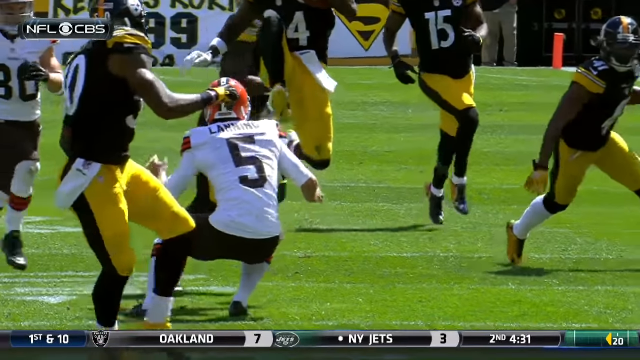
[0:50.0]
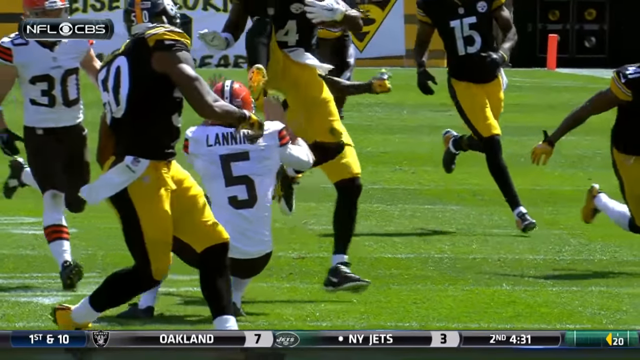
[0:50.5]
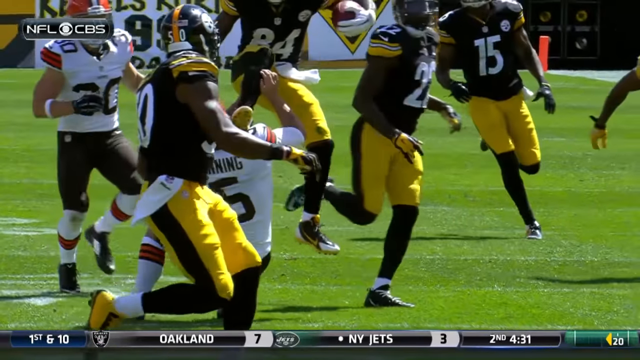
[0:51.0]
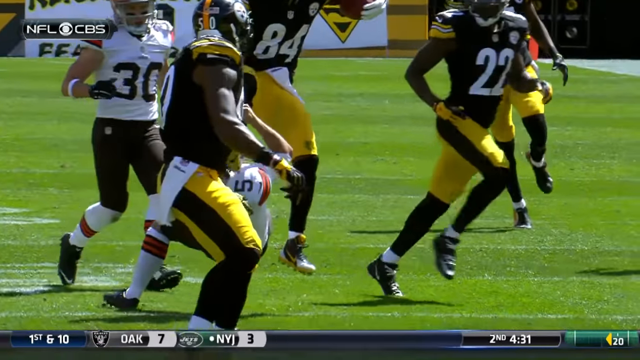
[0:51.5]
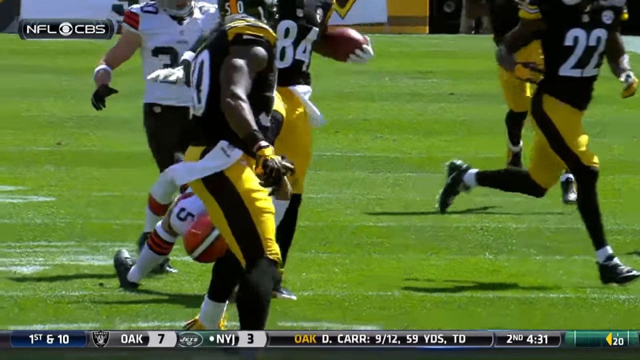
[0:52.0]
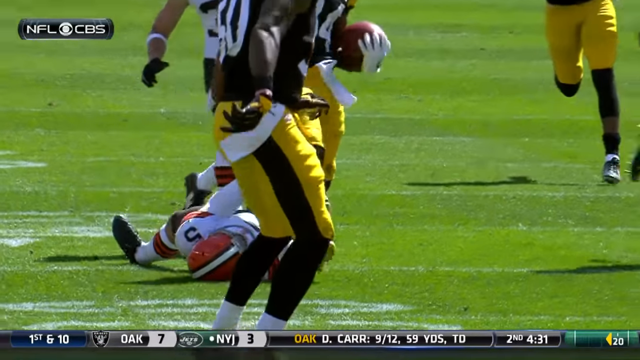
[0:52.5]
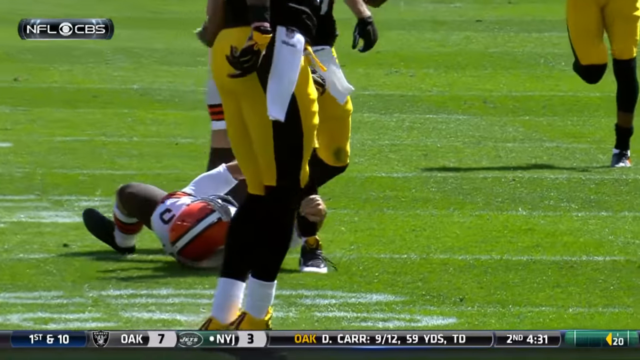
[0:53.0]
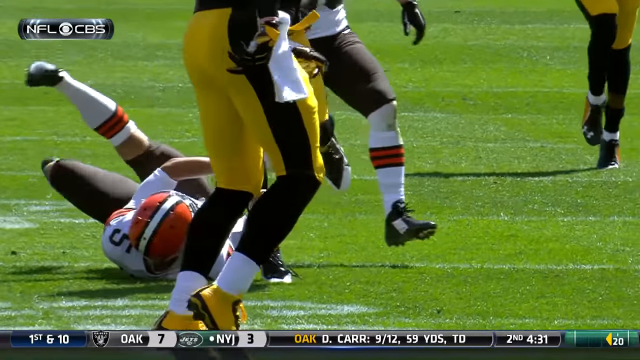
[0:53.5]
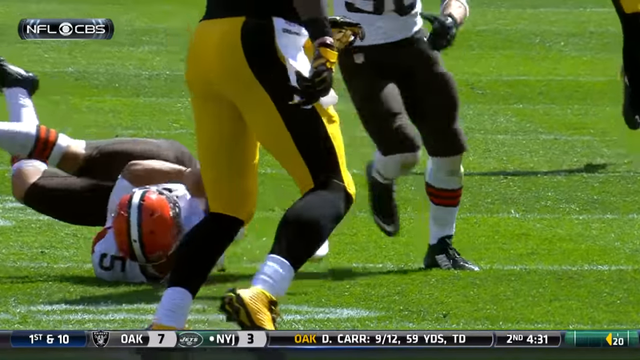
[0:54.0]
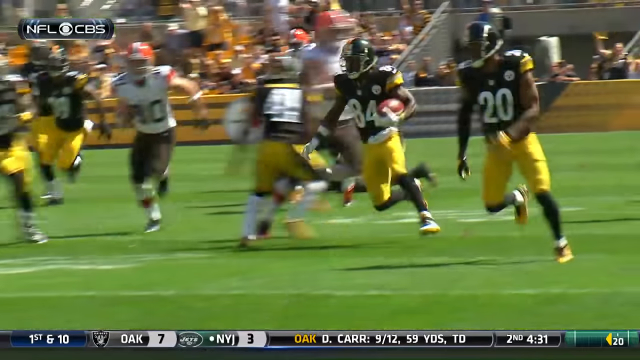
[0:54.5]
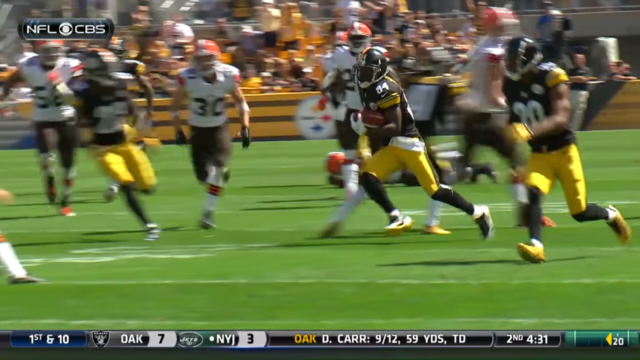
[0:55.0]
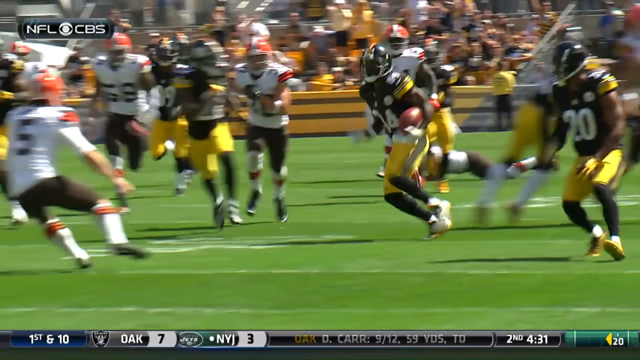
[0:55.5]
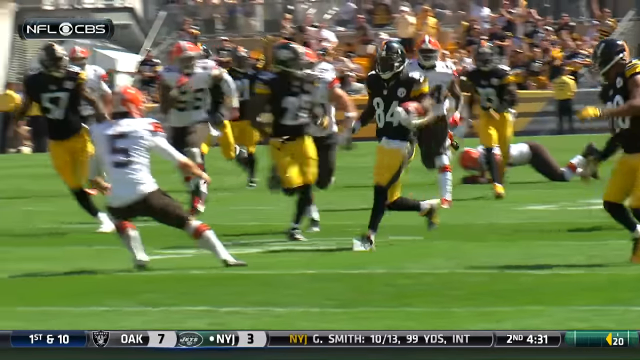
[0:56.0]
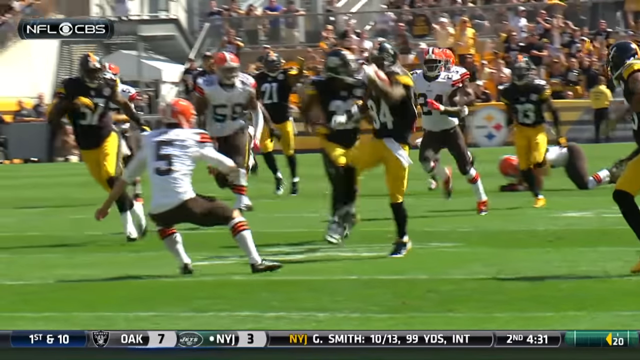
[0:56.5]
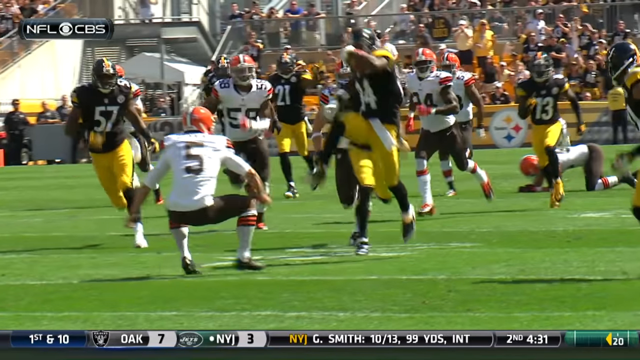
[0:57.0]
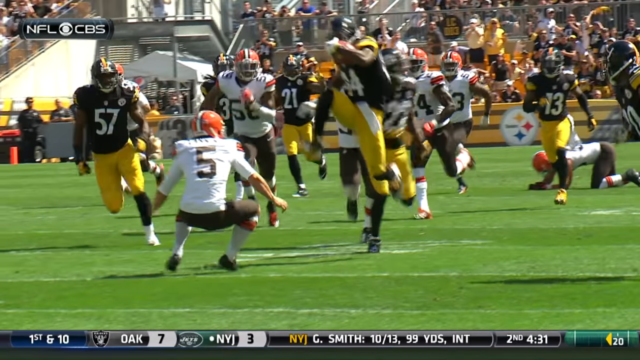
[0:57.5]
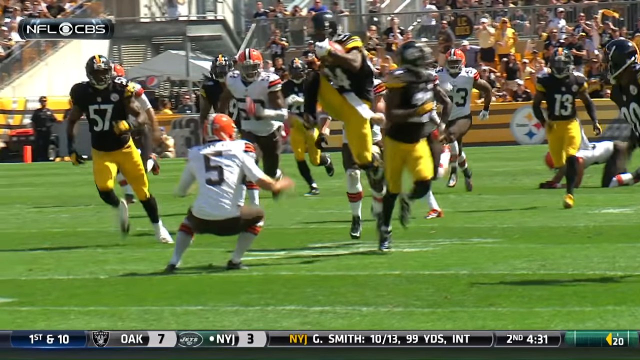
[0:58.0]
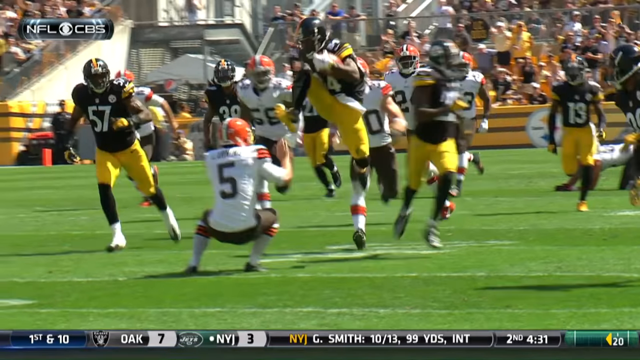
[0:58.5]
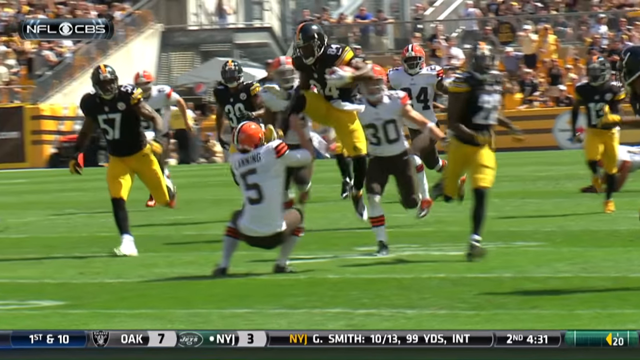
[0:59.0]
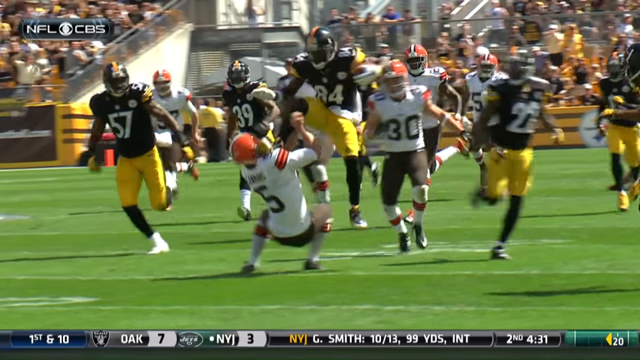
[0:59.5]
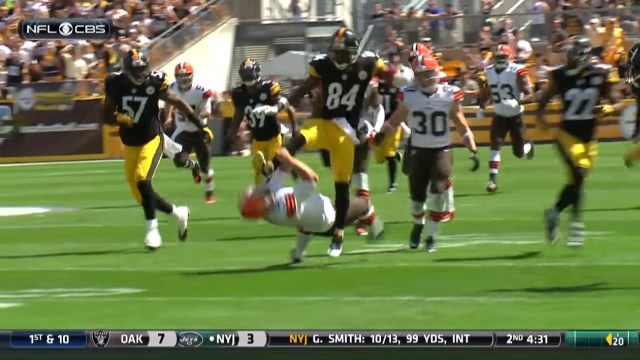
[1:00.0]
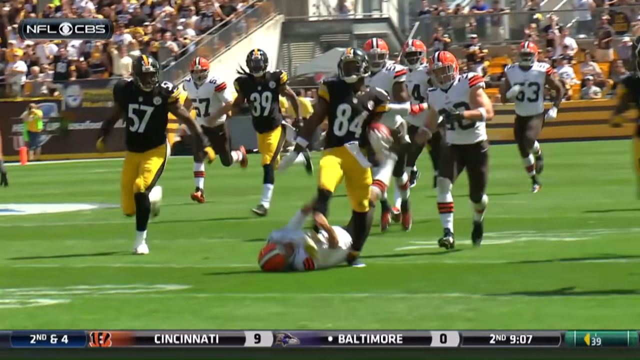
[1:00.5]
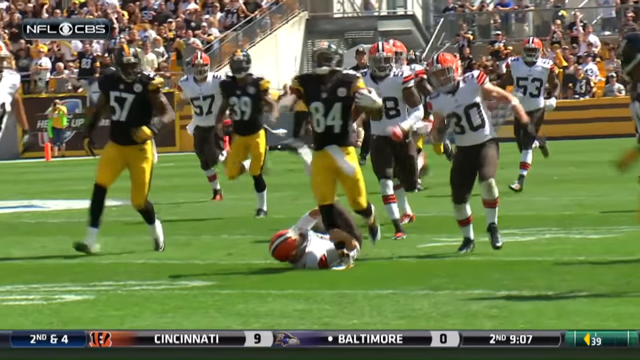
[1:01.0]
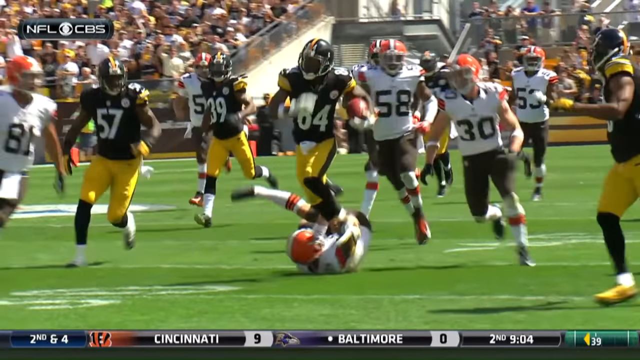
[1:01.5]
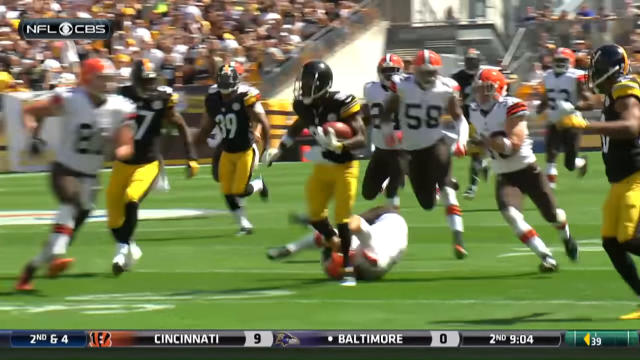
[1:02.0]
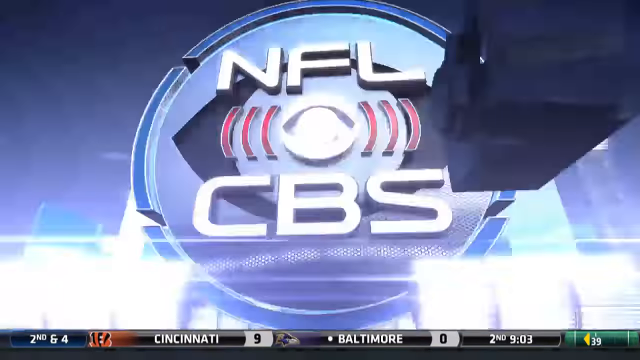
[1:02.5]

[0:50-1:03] In slow motion, number 84 makes a pretty big jump, probably intending to jump over Lanning, number 5, who gets kicked and is sent onto his back. The camera then switches to another, sort of diagonal angle, showing him getting kicked down. Meanwhile, the bottom of the screen keeps updating the scores of other games.